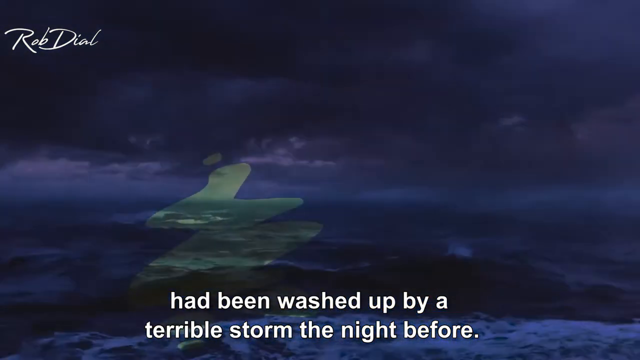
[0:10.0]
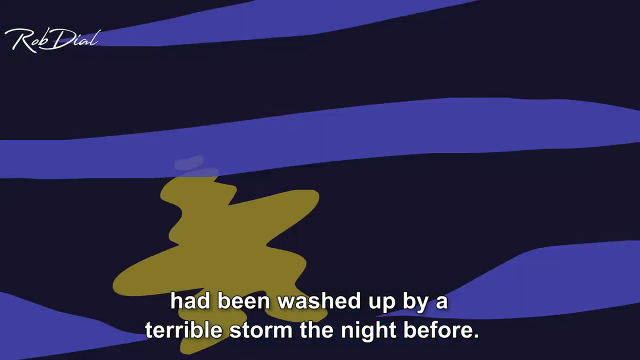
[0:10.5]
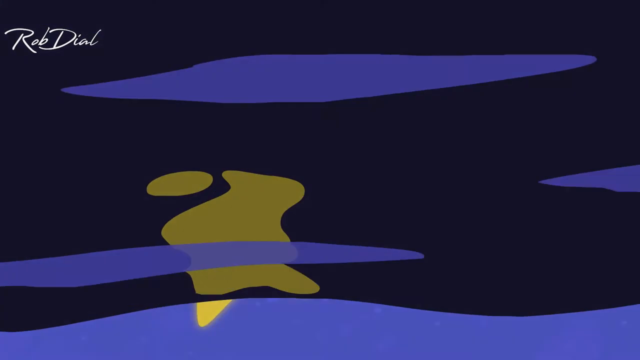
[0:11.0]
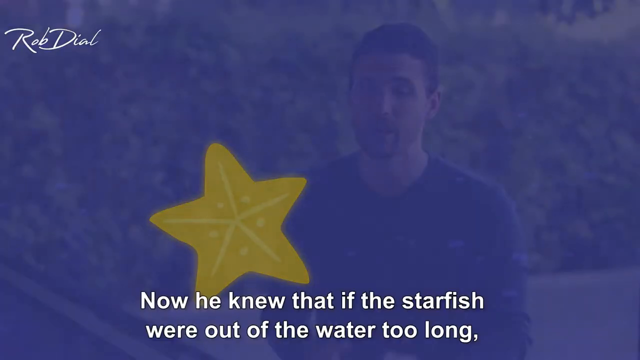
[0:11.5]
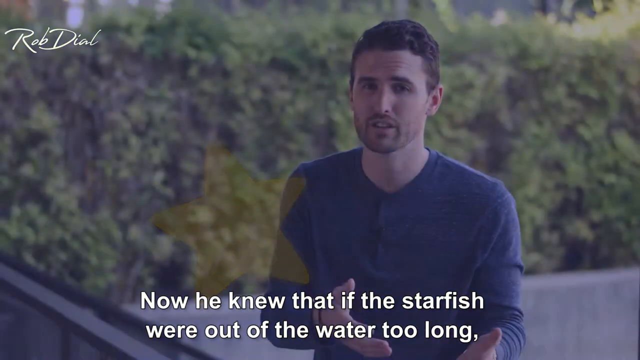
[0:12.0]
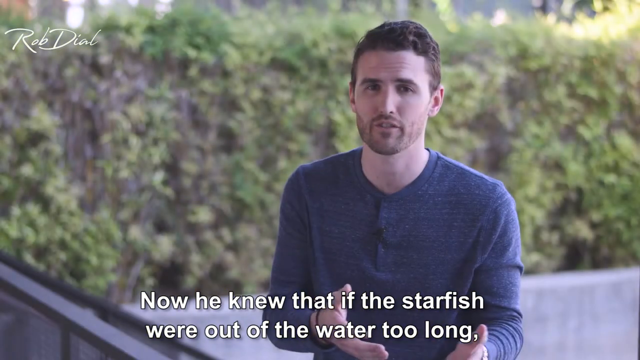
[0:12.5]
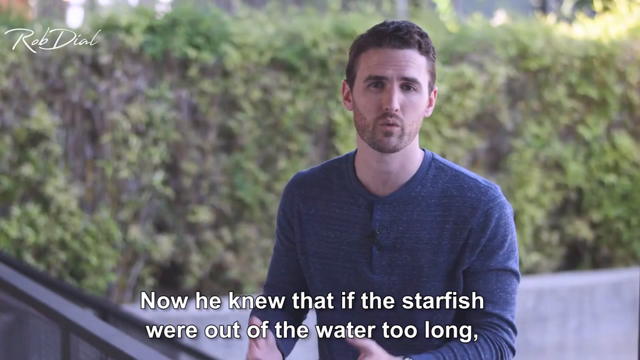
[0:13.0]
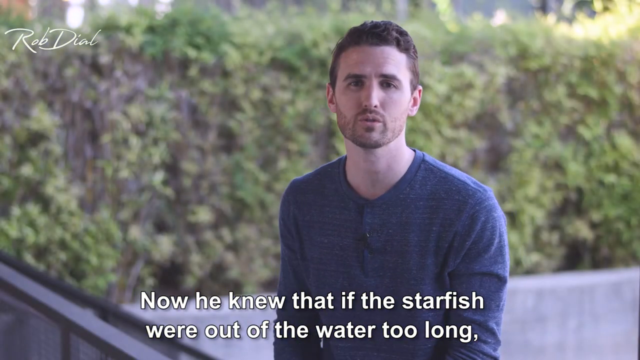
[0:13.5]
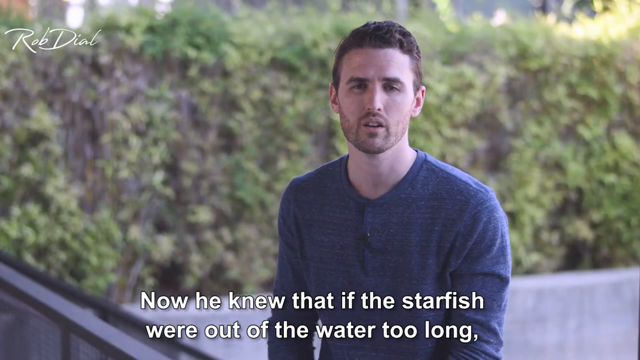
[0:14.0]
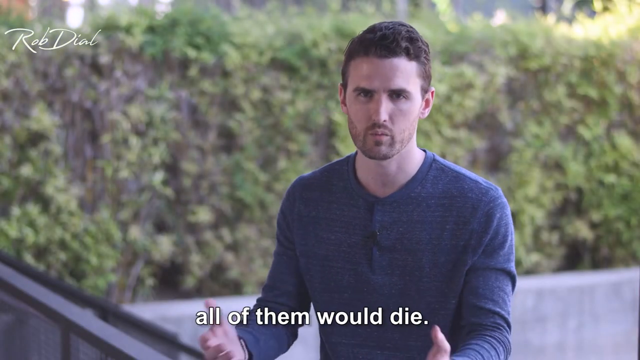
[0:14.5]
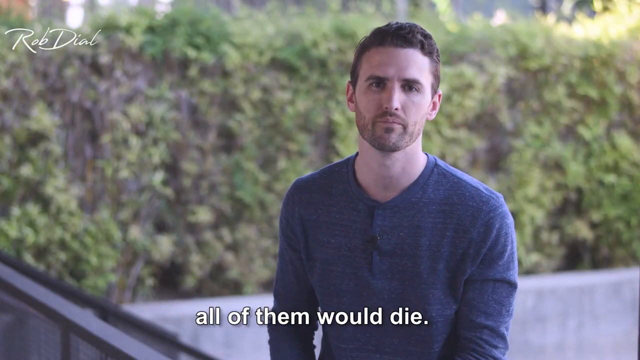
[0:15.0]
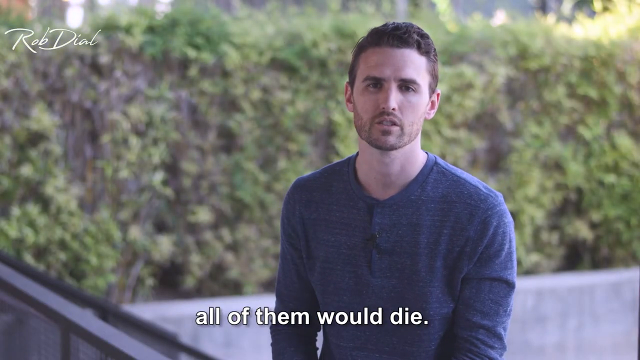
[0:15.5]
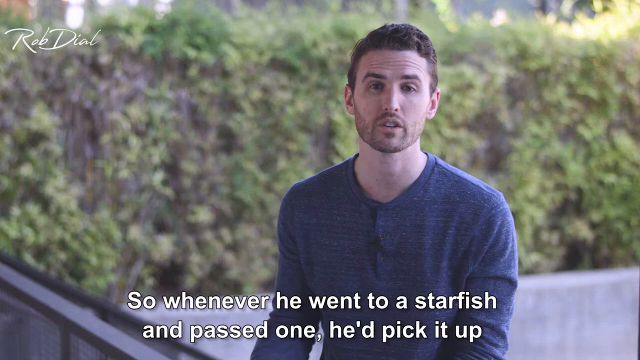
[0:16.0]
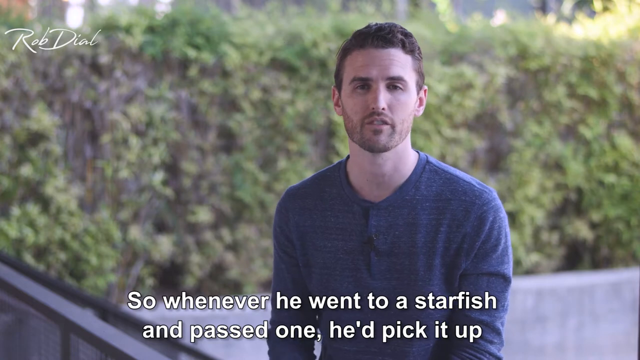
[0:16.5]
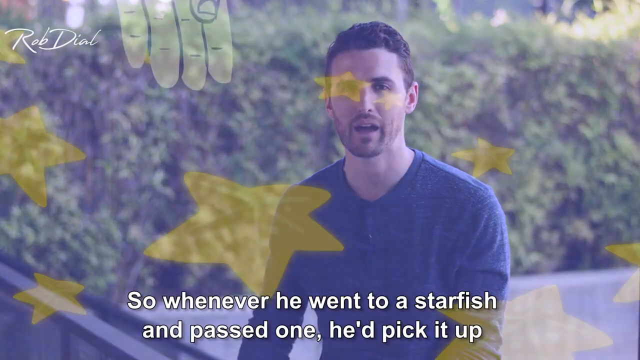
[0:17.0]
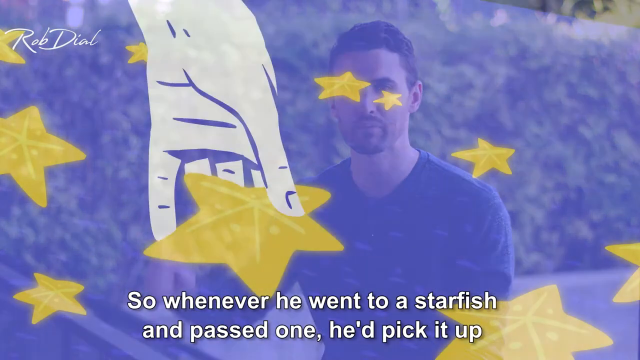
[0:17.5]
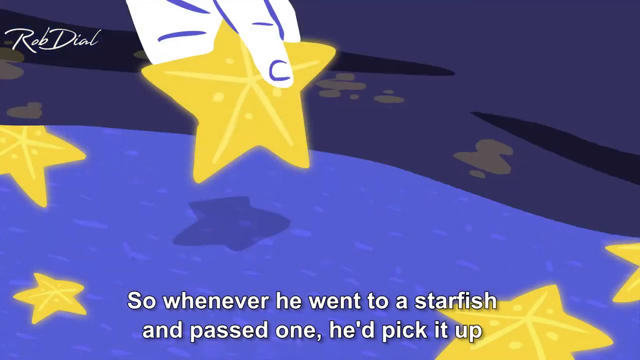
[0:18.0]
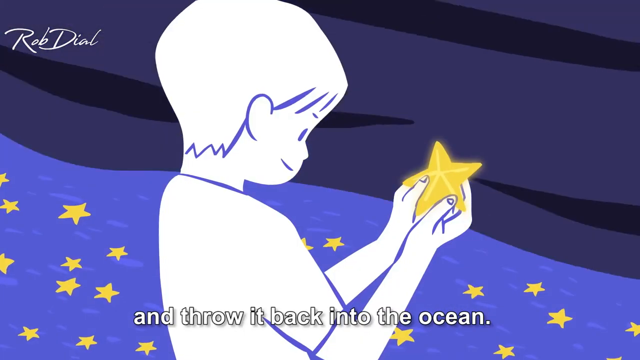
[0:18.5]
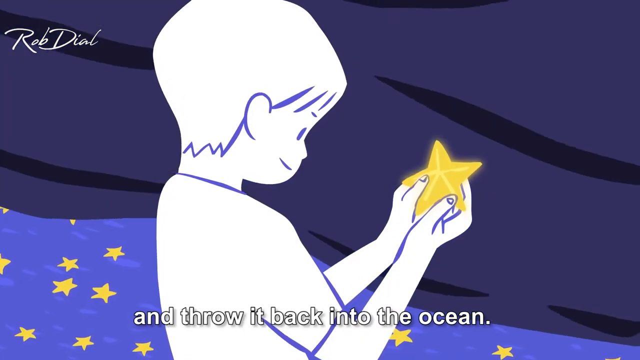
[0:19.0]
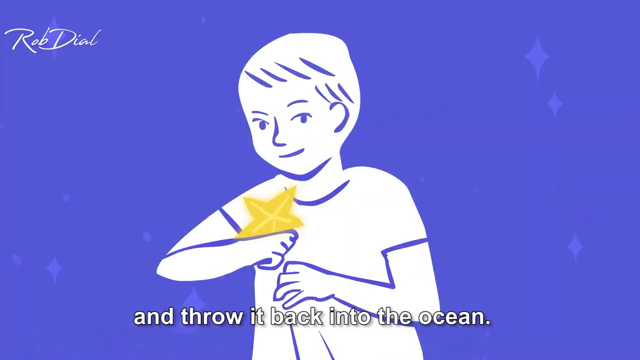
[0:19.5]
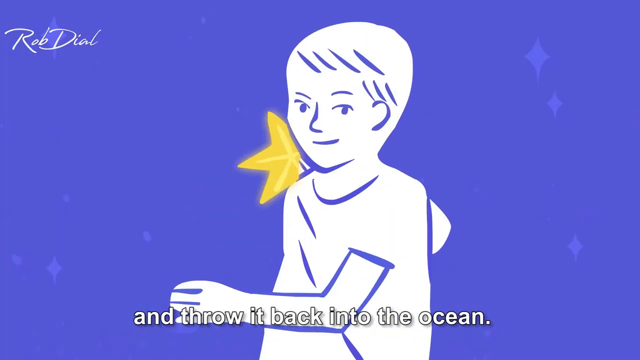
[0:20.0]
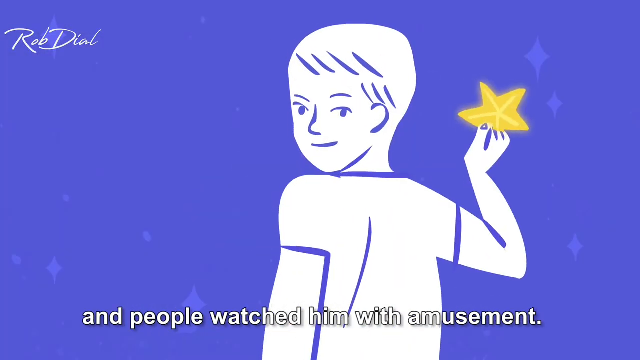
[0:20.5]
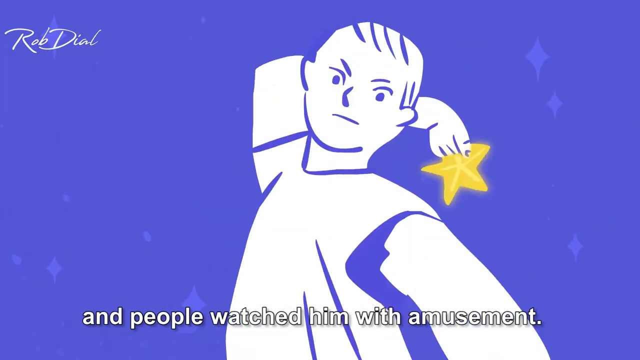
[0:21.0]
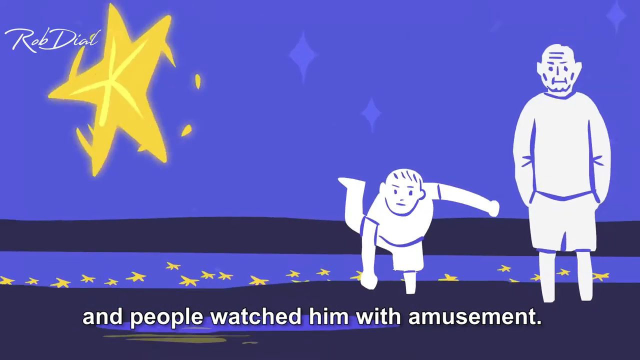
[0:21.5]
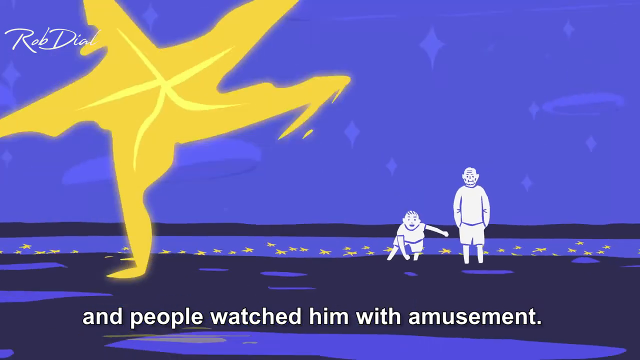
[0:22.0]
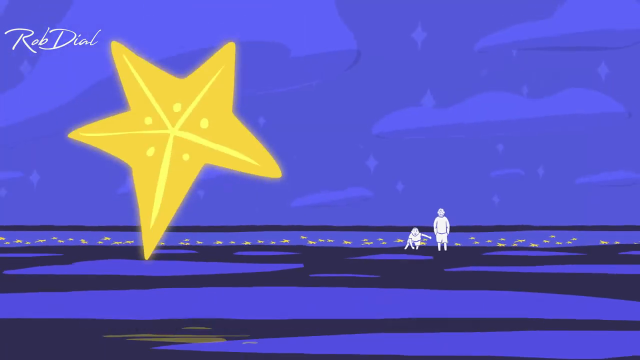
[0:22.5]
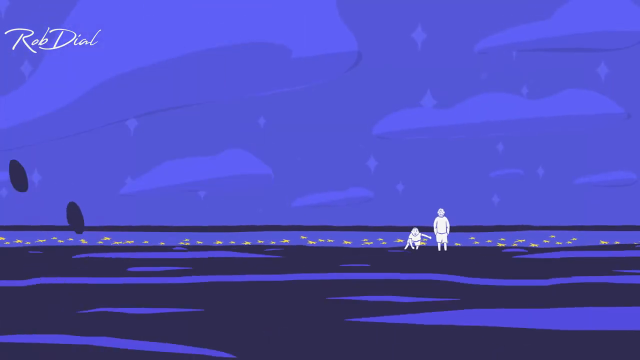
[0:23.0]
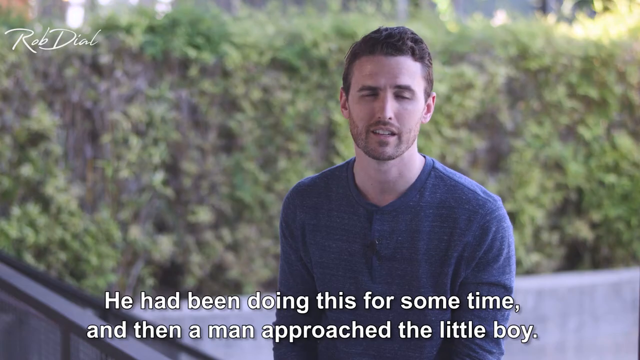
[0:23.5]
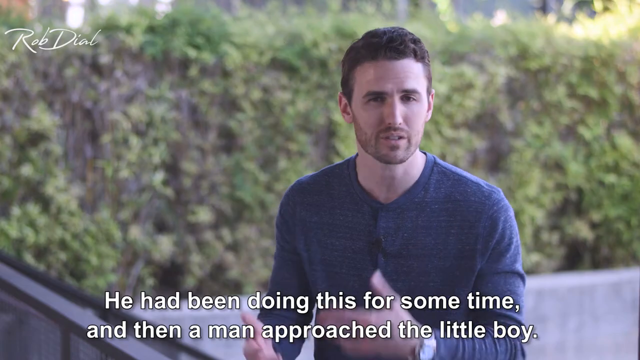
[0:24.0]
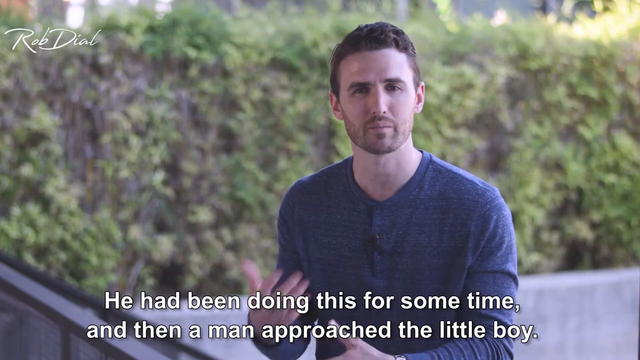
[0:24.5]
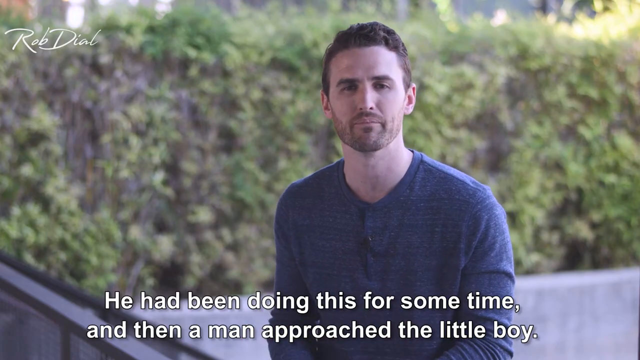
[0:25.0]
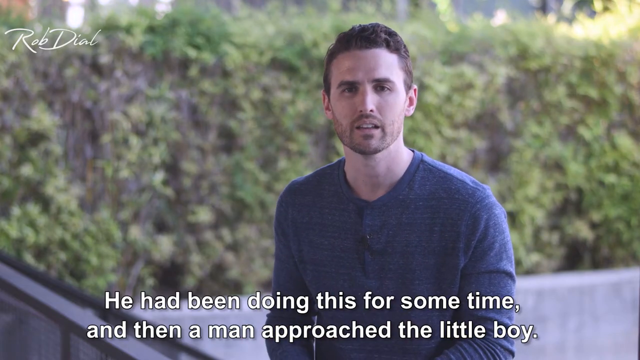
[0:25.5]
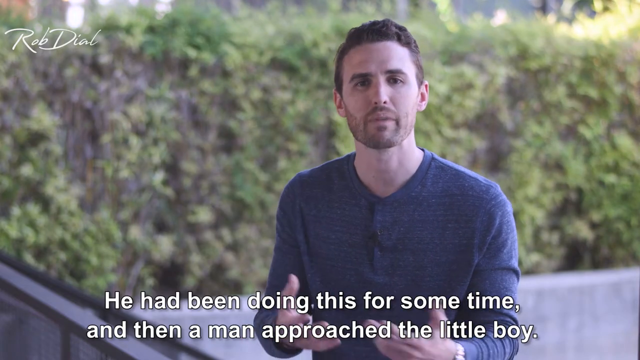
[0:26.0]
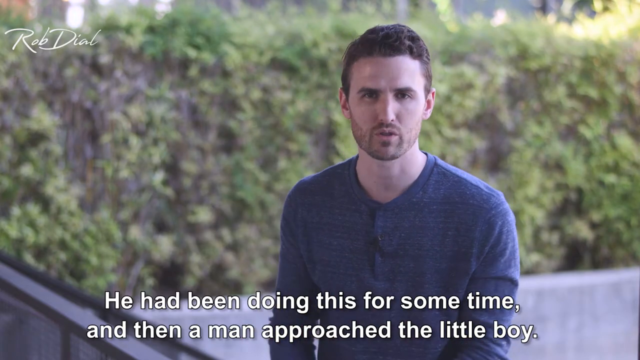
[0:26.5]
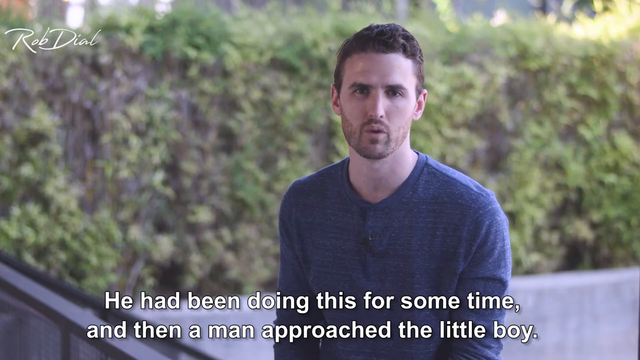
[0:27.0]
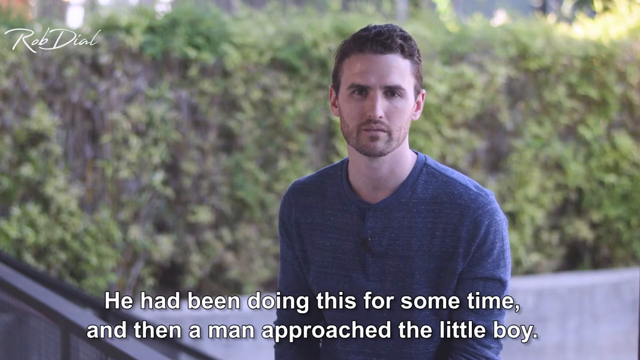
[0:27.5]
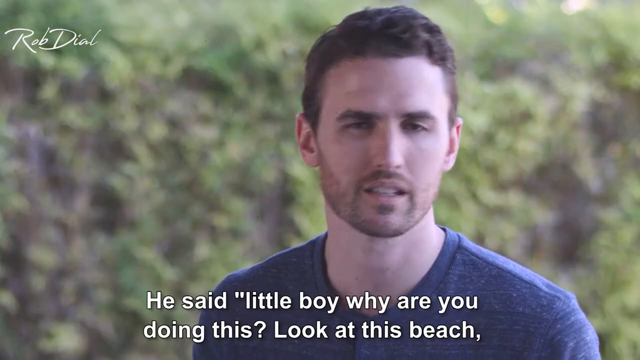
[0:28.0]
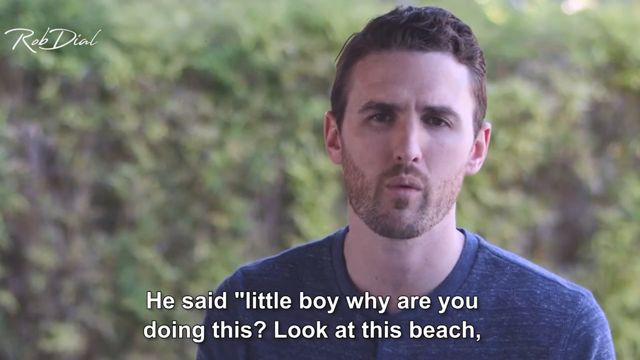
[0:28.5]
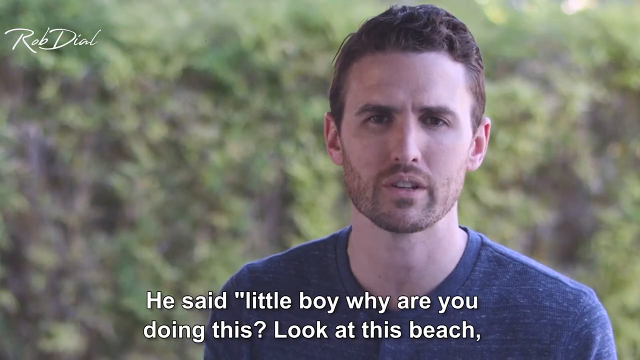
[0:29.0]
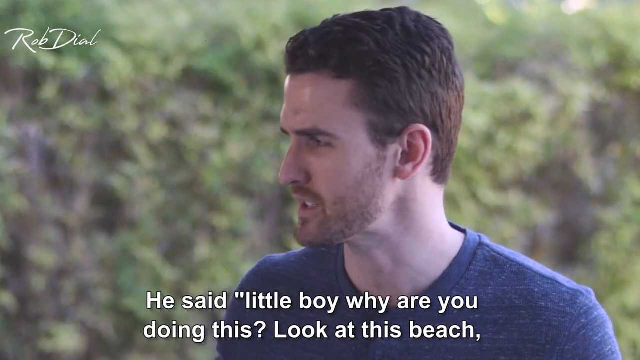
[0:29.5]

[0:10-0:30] The Caucasian man in the blue shirt narrates the story while looking at the camera and gesturing with his hands. The caption at the bottom of the screen reads: "now he knew that if the starfish were out of the water too long all of them will die so whenever he went to a starfish and passed one He would pick it up and throw it back into the ocean and people watched him with amusement. He had been doing this for some time and then a man approached the little boy. He said, 'little boy, why are you doing this? Look at this beach'". The video cuts between the man narrating and a clip of the boy picking up a starfish and throwing it into the ocean, and the old man is seen approaching the boy.